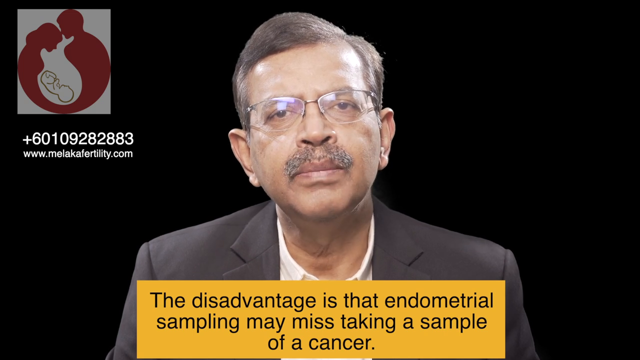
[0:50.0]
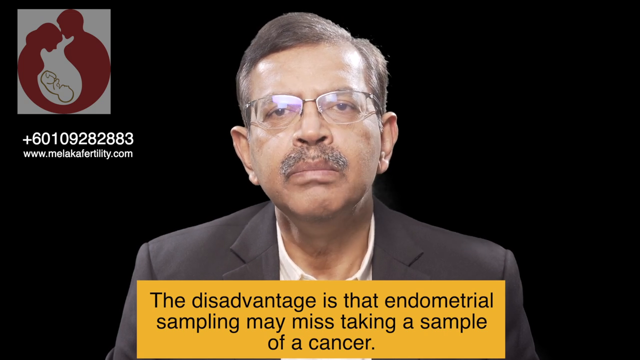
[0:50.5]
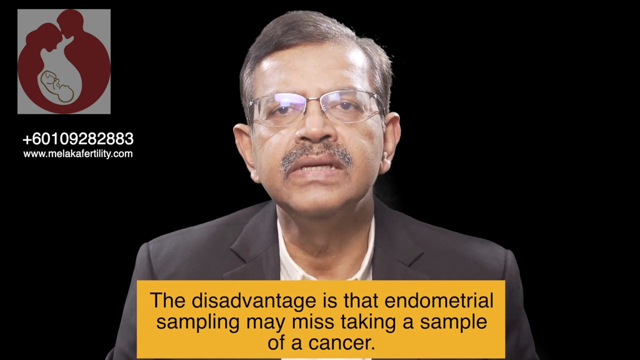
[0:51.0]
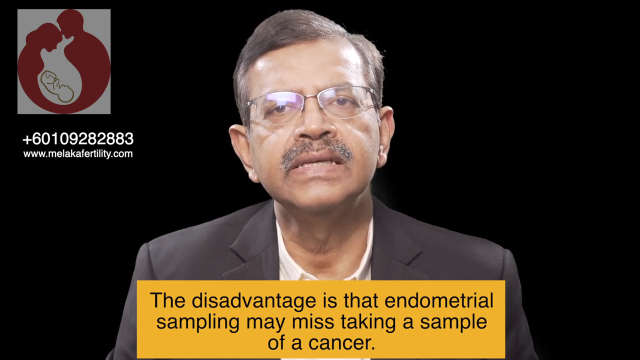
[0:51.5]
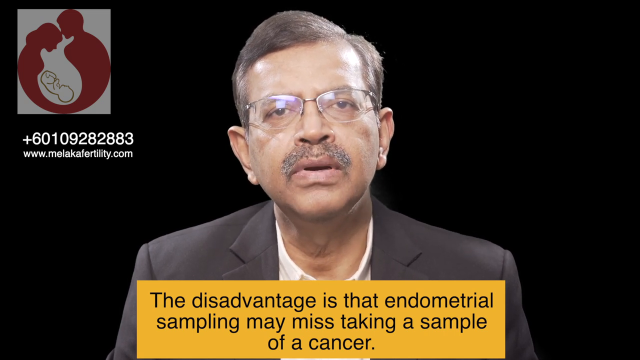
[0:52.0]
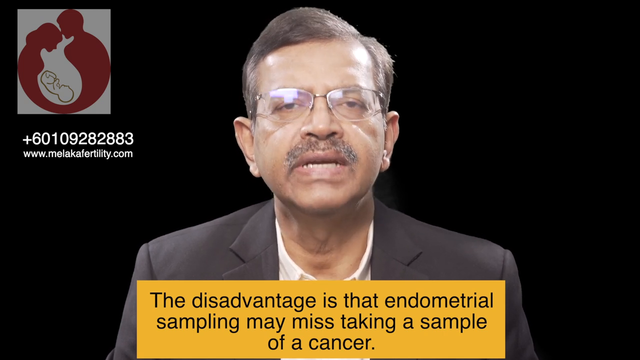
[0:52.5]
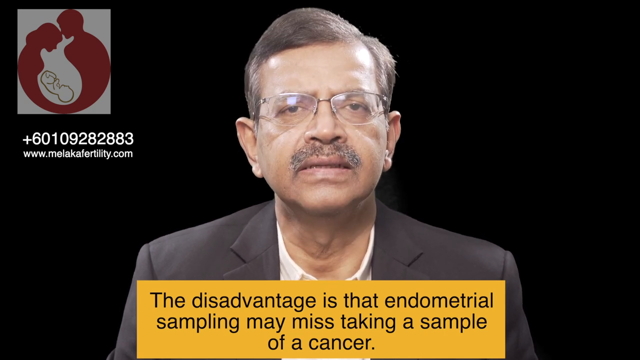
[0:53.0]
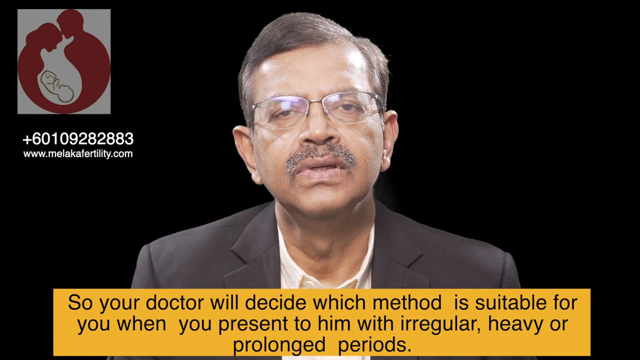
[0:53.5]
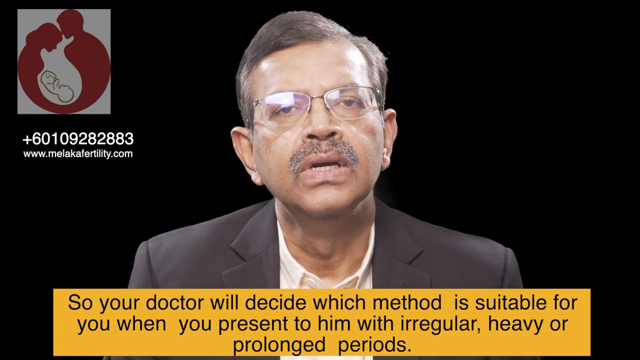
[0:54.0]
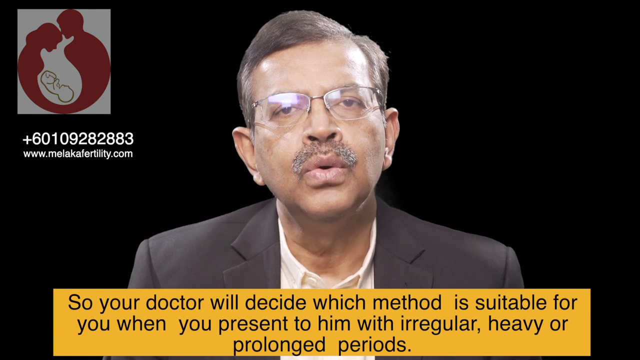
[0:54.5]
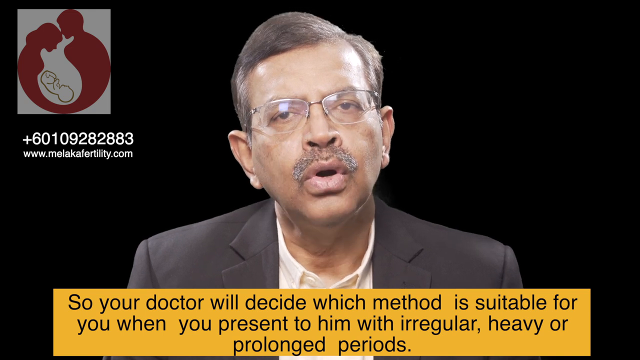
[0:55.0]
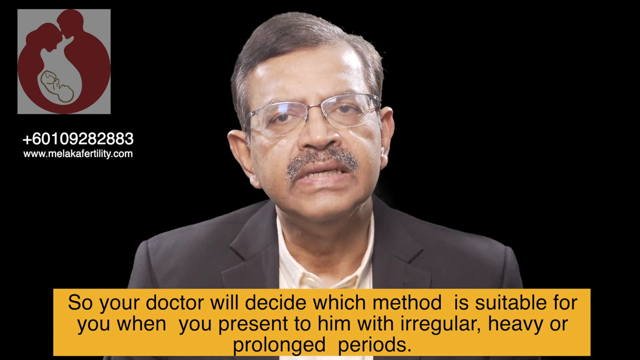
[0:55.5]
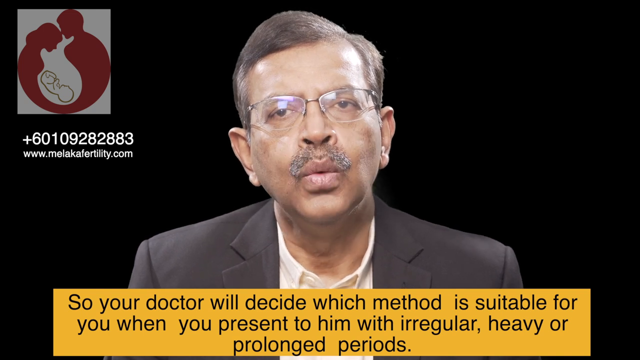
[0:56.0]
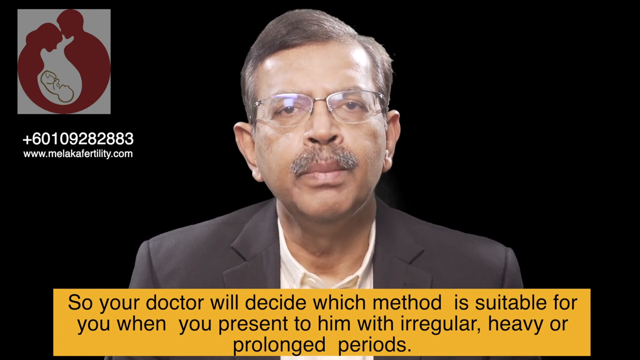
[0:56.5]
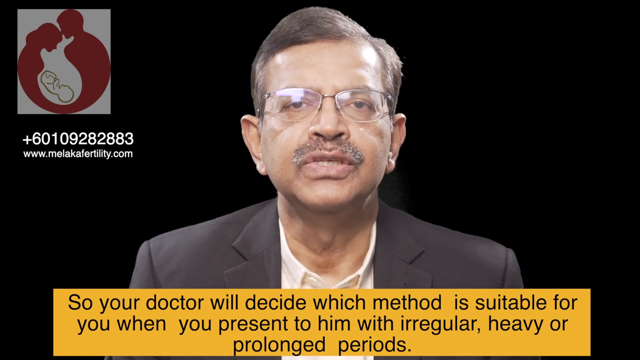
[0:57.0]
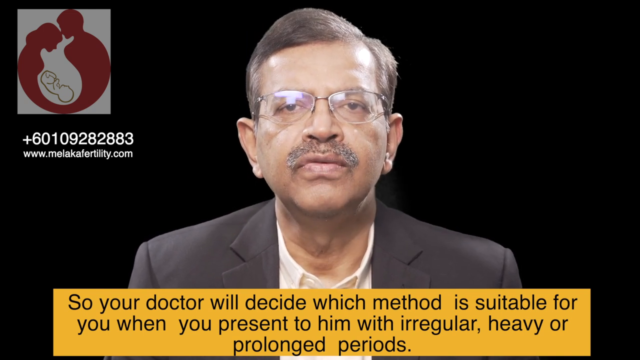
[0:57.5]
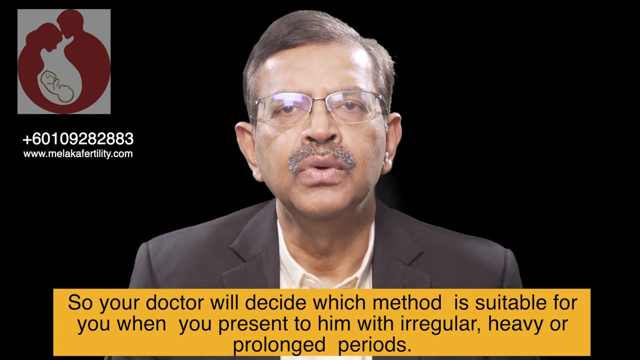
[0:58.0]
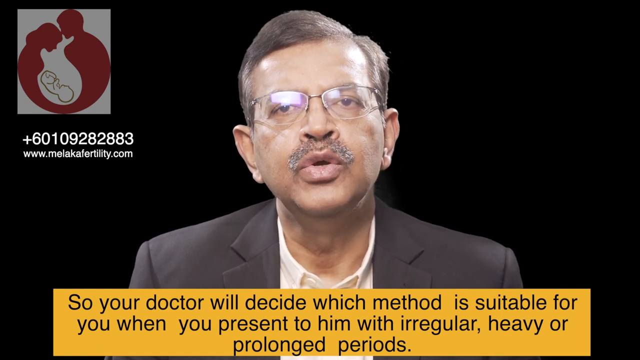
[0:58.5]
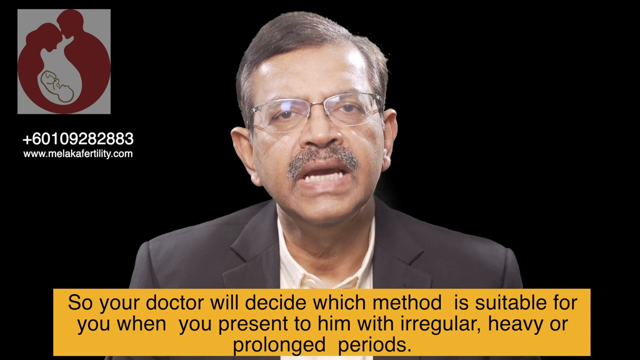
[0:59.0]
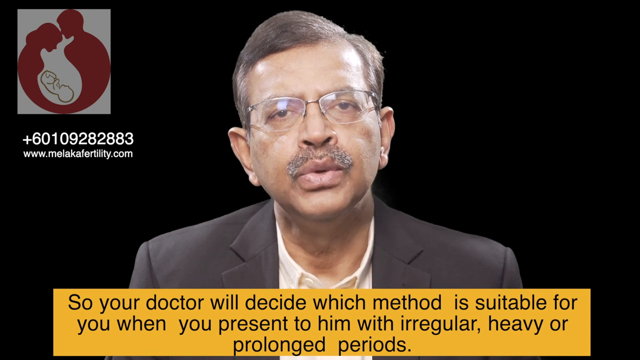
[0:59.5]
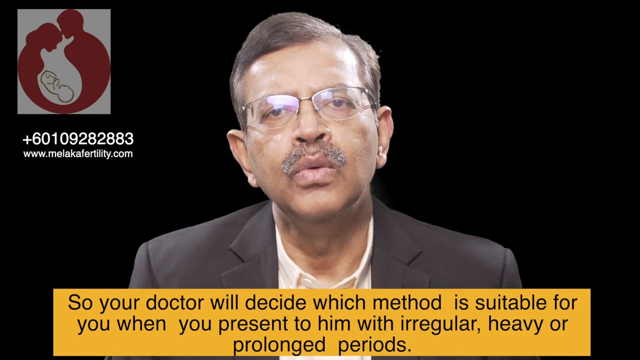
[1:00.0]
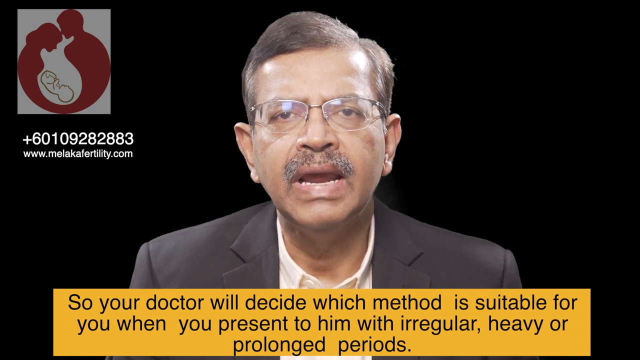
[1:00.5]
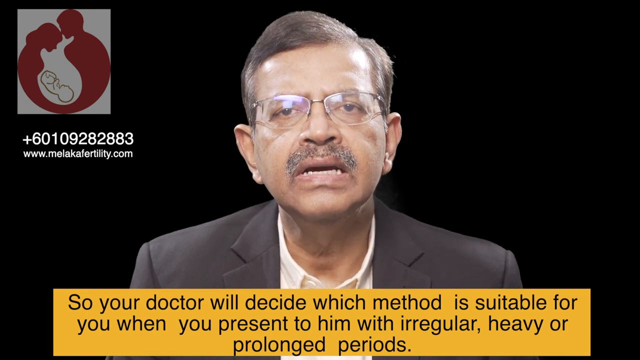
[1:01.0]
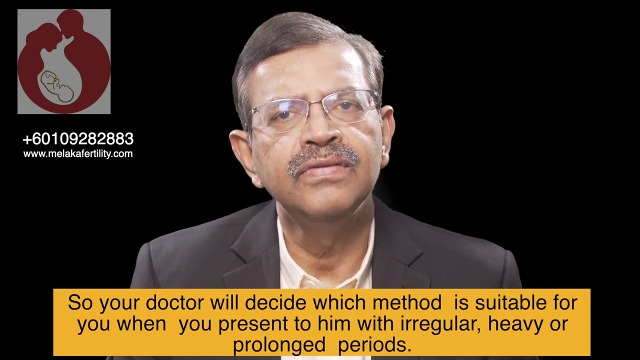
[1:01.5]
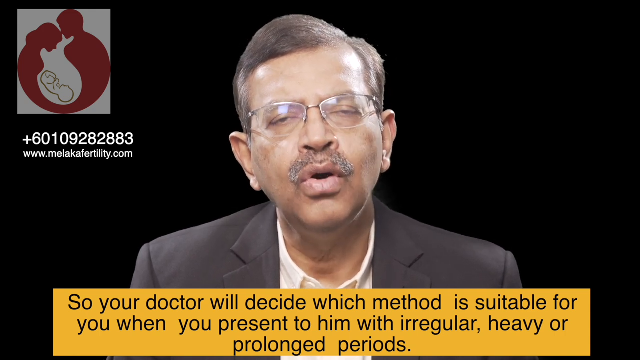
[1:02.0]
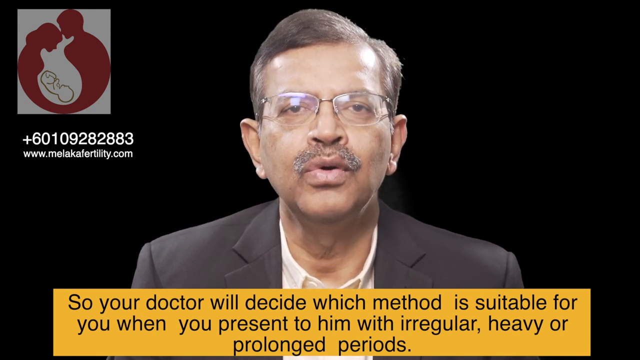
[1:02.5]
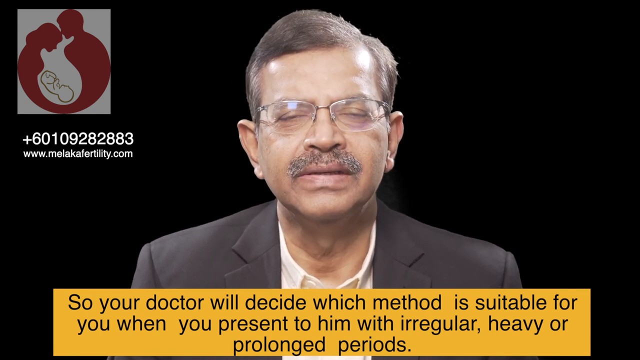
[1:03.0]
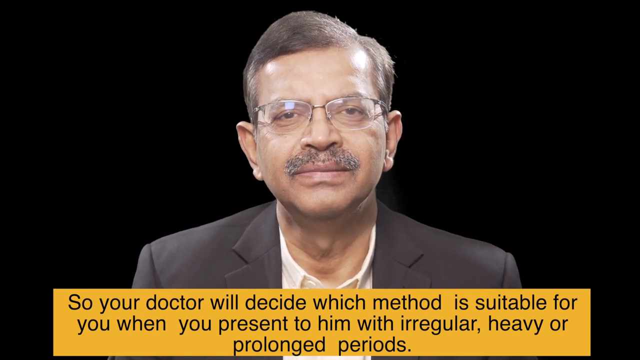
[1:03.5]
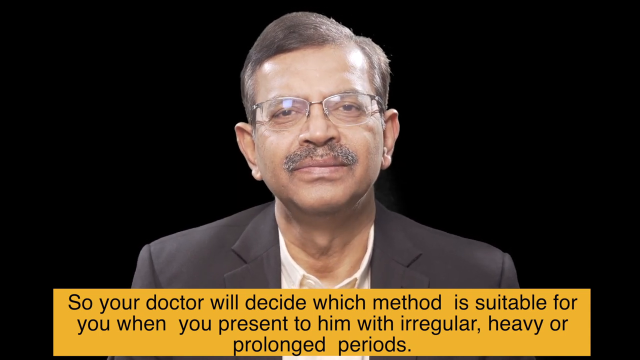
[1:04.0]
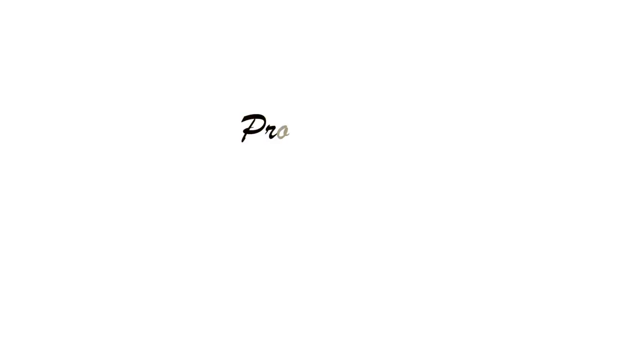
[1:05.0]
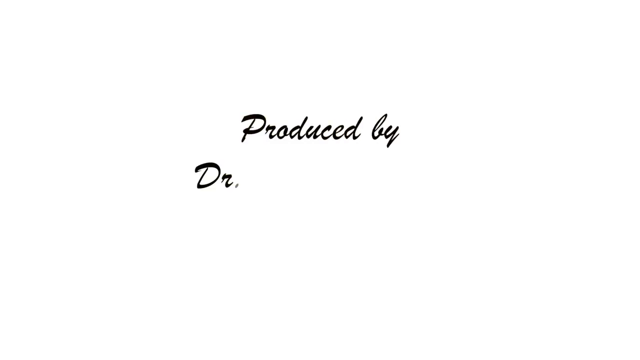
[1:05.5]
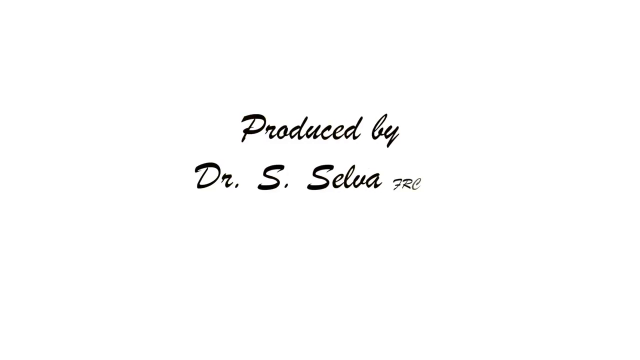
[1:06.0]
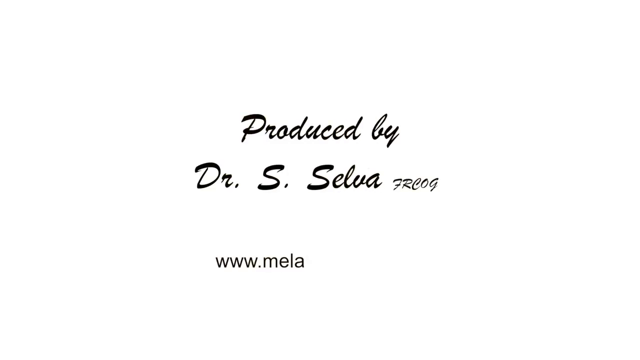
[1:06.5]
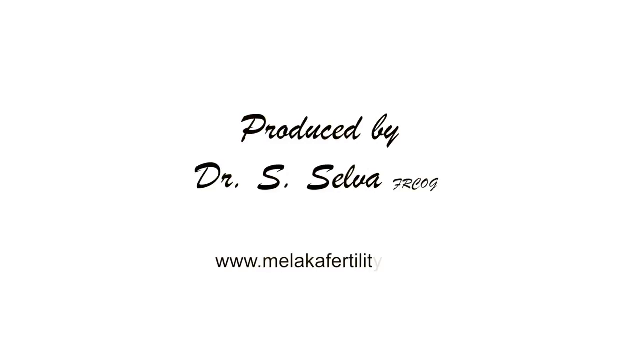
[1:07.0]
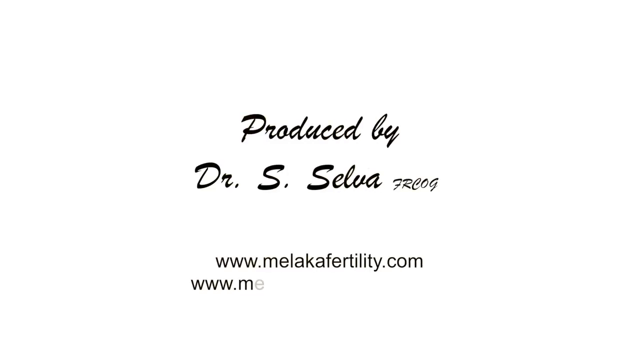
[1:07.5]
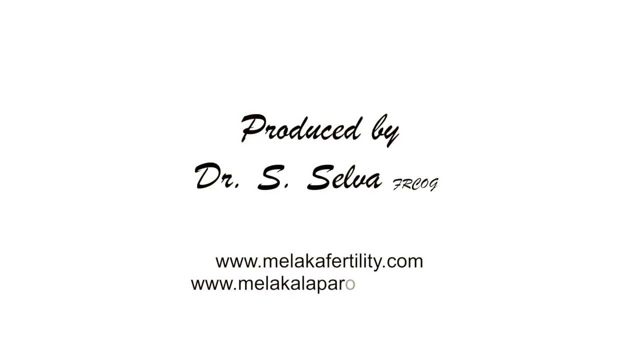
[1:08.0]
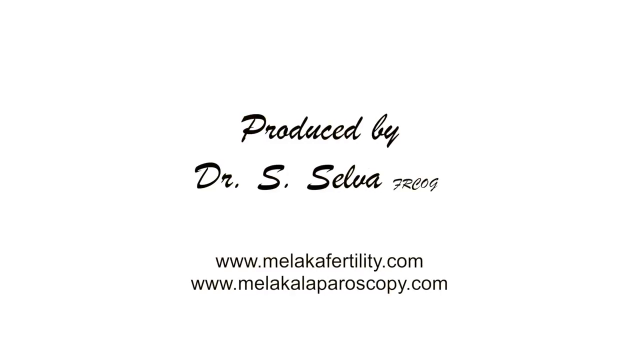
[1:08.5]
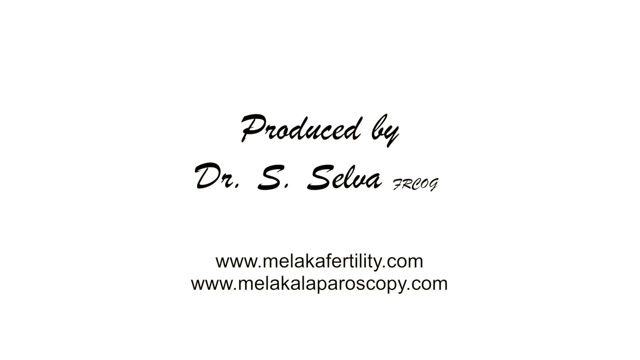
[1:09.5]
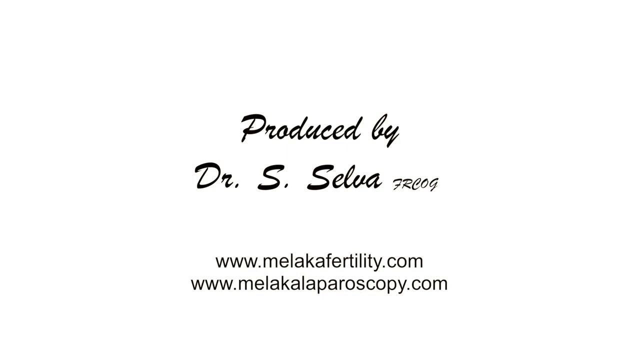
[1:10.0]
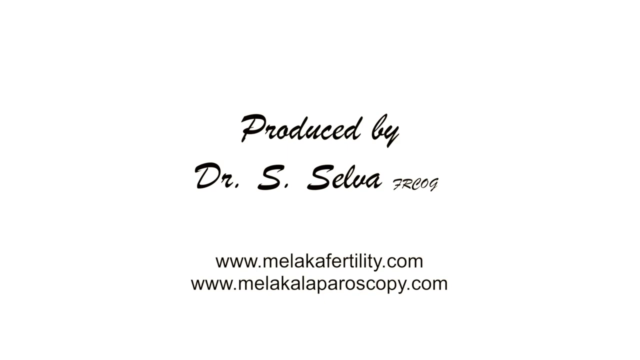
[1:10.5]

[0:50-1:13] The next subtitle reads "so your doctor will decide which method is suitable for you when you present to him with irregular, heavy, or prolonged periods." The man is still speaking to the camera, using no hand gestures, his head tilting slightly as he speaks. At the top left is a white and red logo of two parents hugging a baby, in the shape of something like a uterus. Right below the logo are a phone number and a website reading "www.melakafertility.com". When he finishes speaking, he smiles slightly at the camera. At the end, a white background appears with black italic writing in the middle reading "produced by Dr. S. Selva". Below it, in normal black writing, it reads "www.melakafertility.com, www.melakalaparoscopy.com".